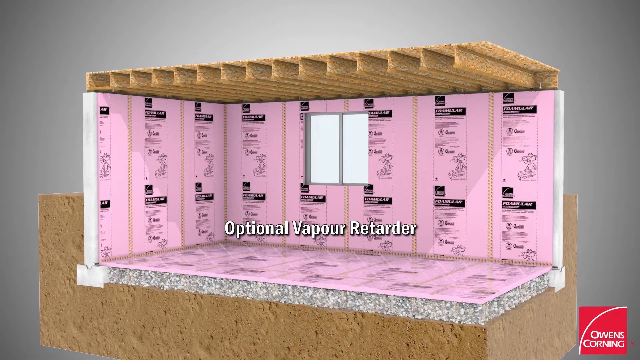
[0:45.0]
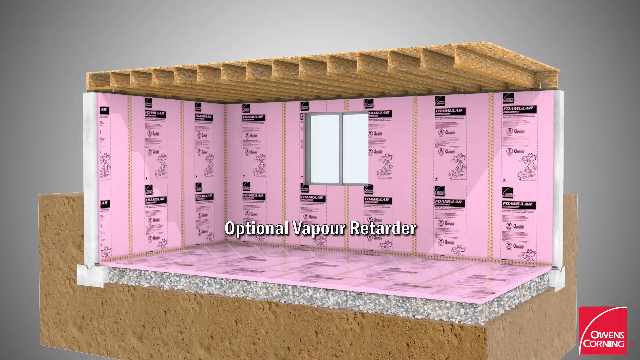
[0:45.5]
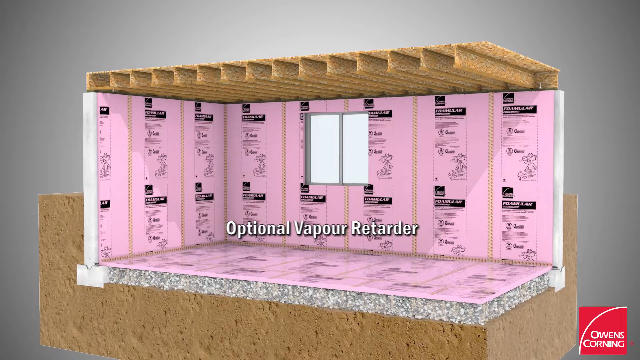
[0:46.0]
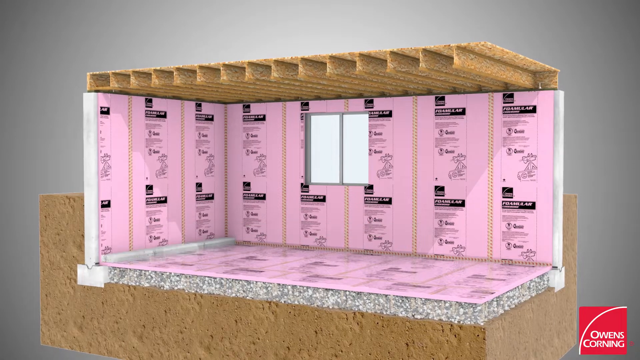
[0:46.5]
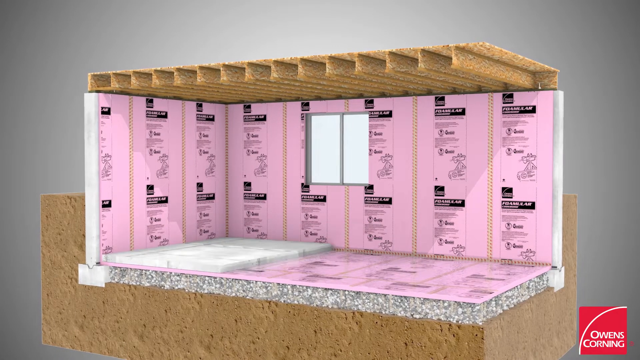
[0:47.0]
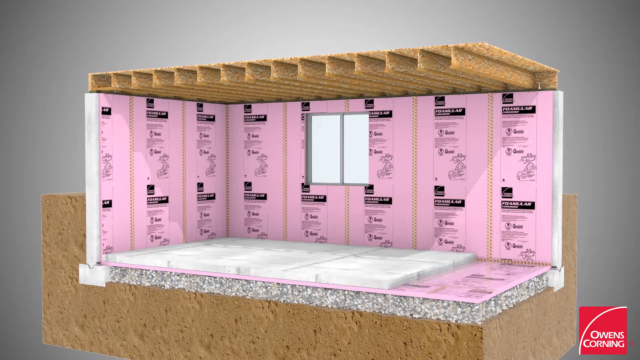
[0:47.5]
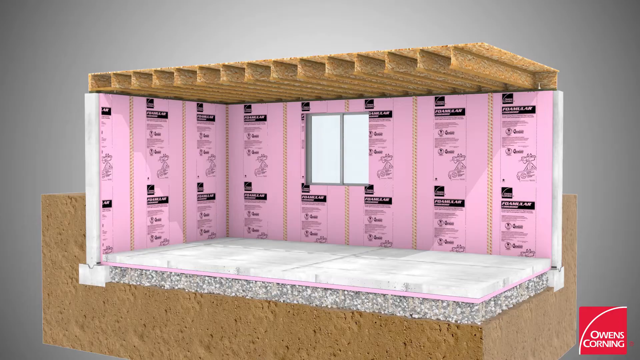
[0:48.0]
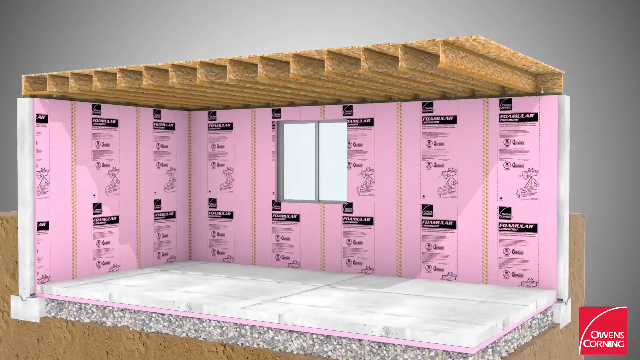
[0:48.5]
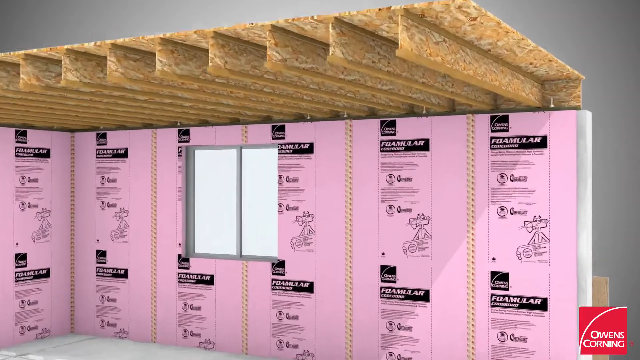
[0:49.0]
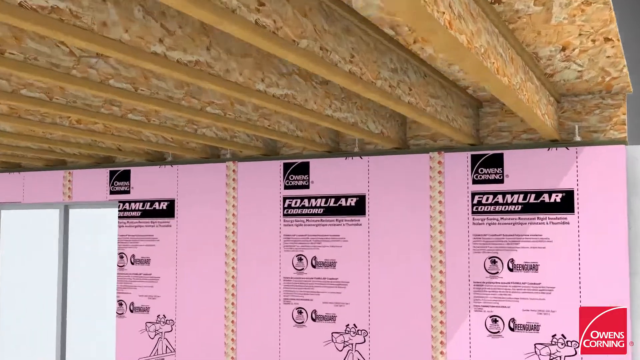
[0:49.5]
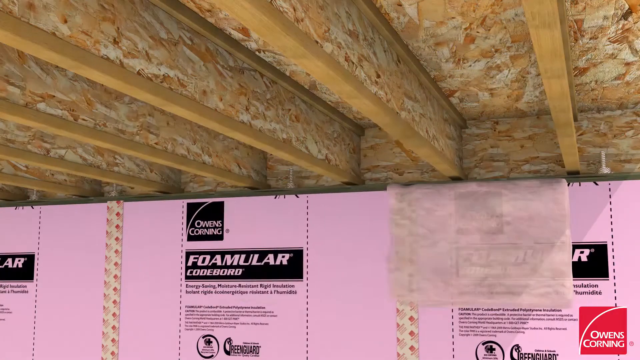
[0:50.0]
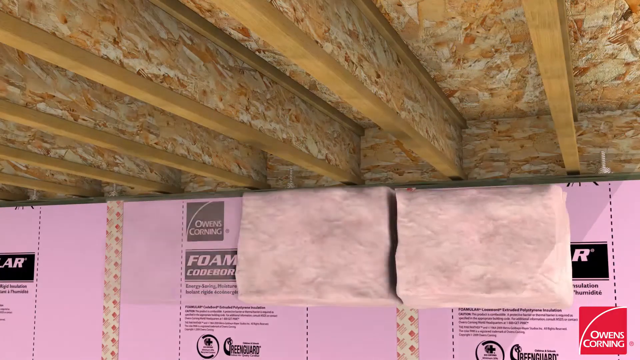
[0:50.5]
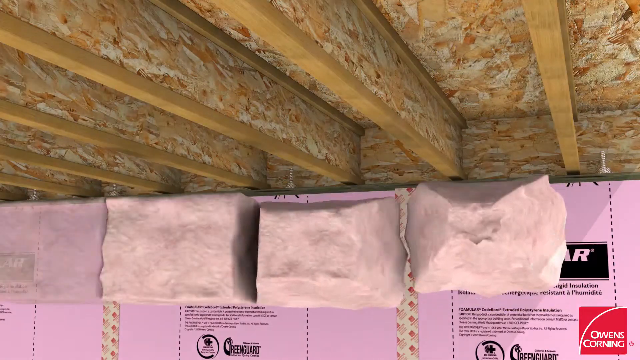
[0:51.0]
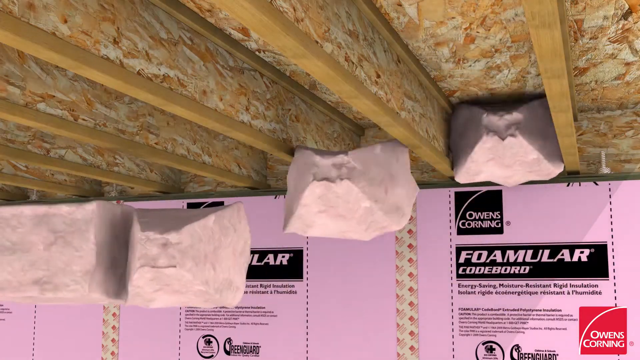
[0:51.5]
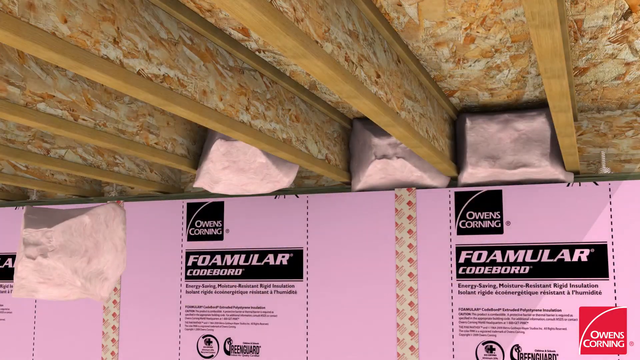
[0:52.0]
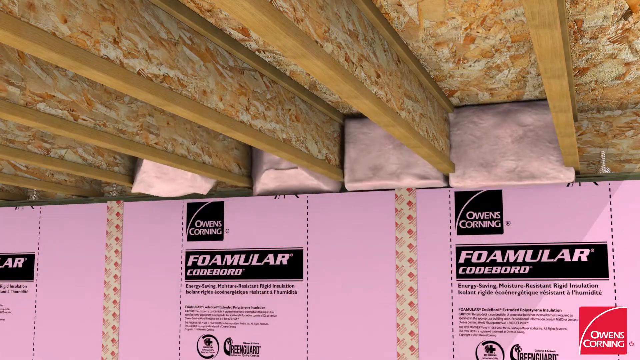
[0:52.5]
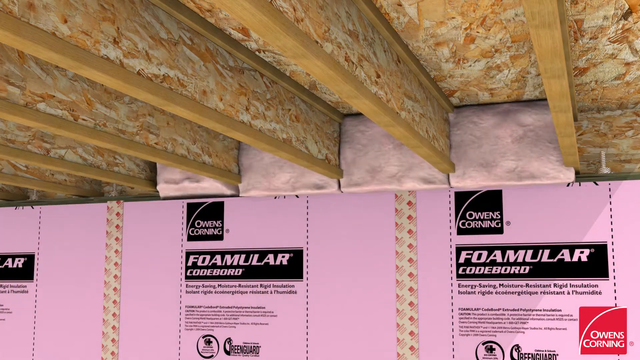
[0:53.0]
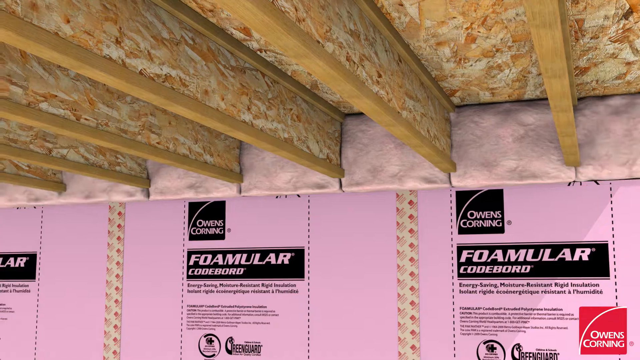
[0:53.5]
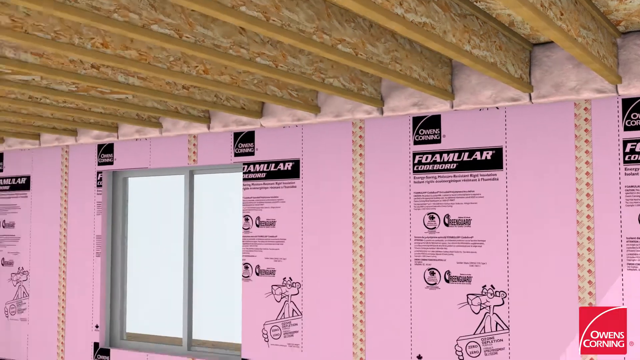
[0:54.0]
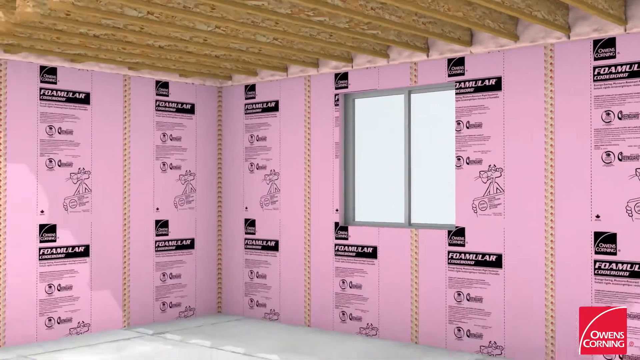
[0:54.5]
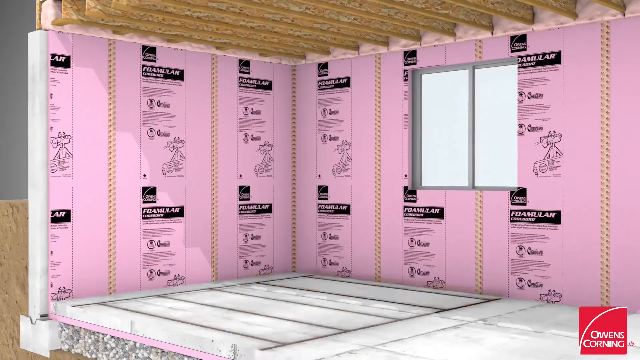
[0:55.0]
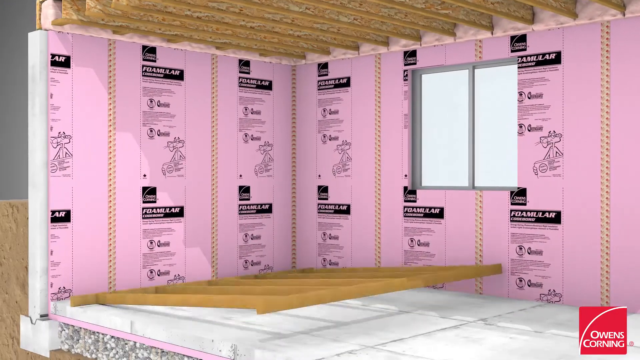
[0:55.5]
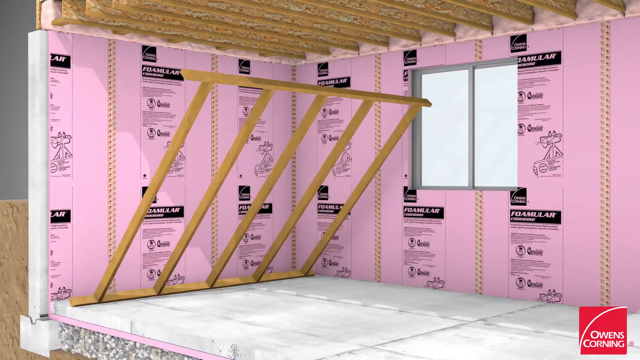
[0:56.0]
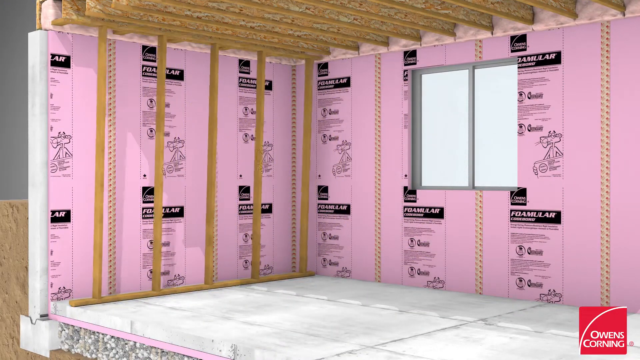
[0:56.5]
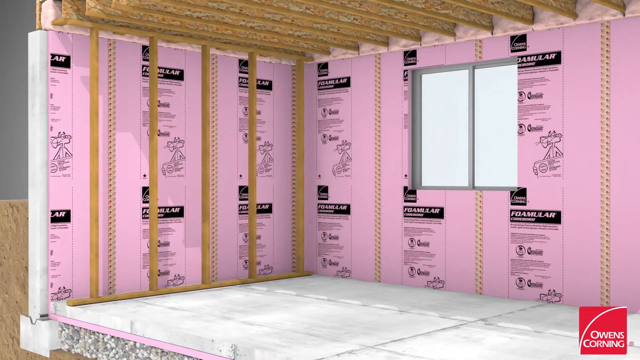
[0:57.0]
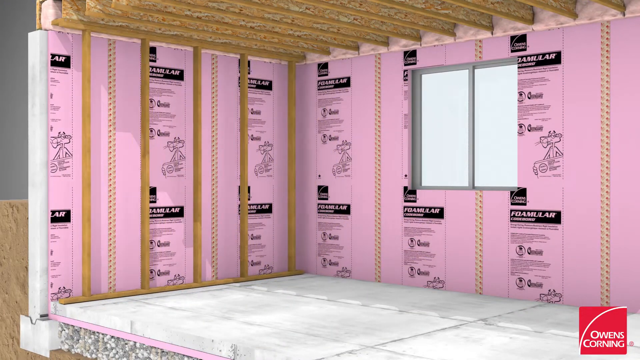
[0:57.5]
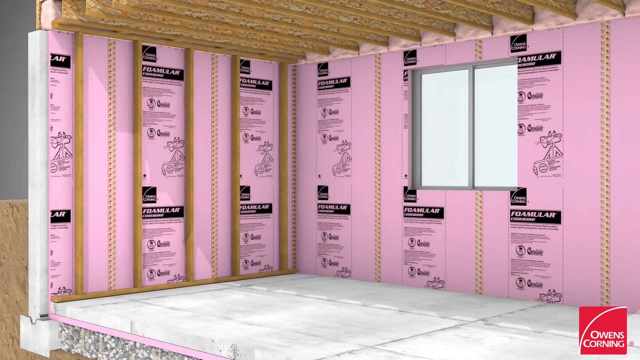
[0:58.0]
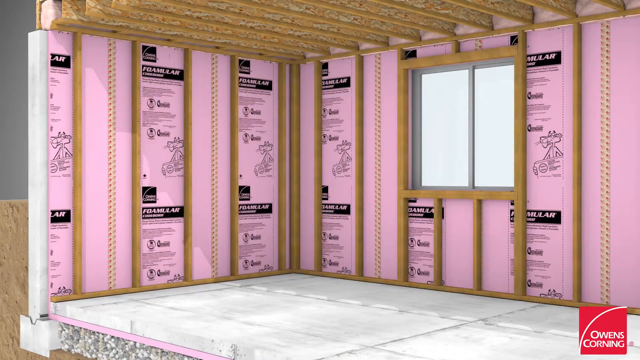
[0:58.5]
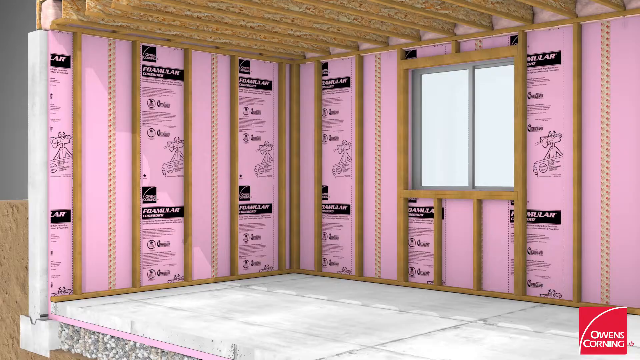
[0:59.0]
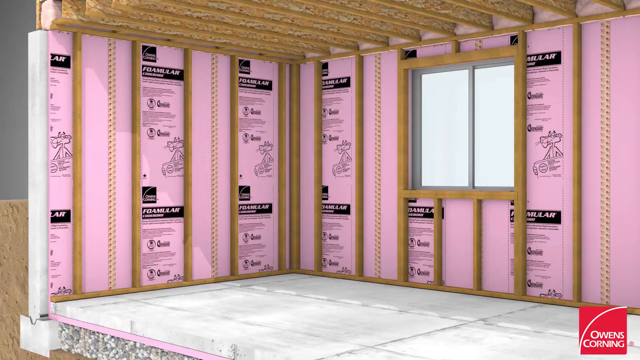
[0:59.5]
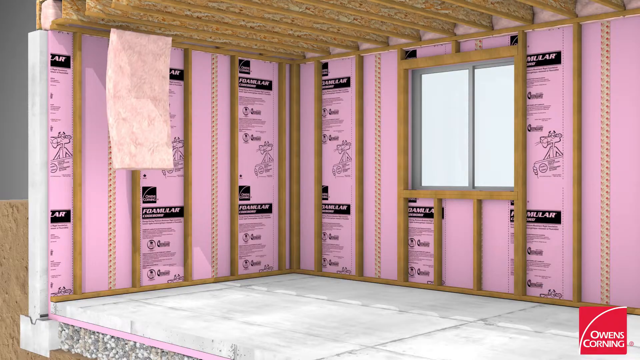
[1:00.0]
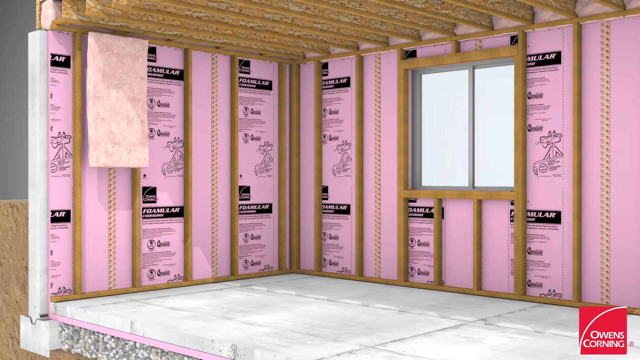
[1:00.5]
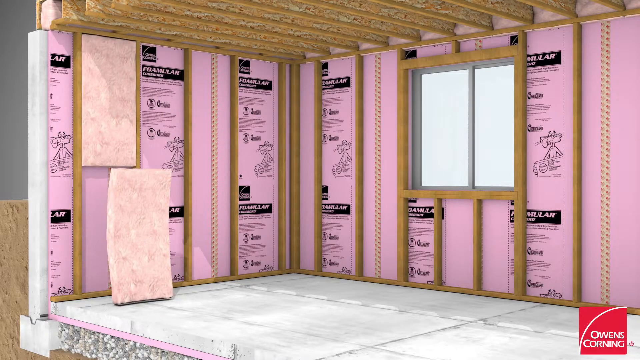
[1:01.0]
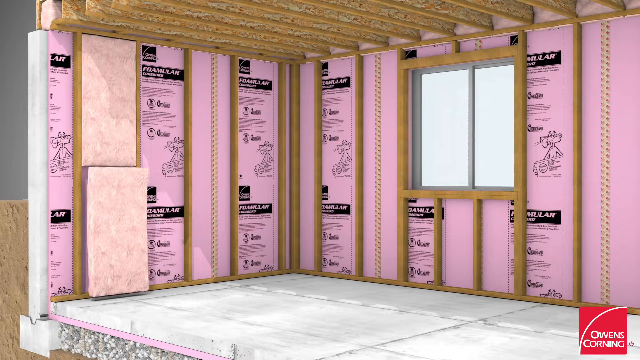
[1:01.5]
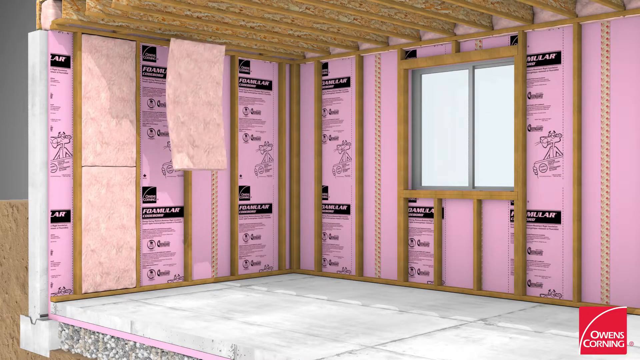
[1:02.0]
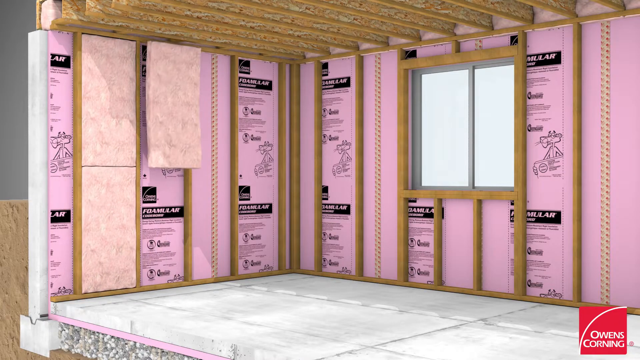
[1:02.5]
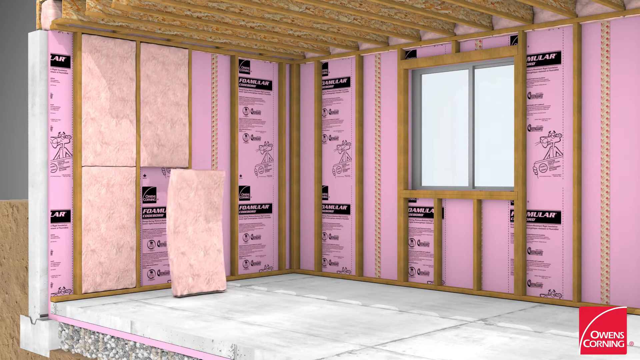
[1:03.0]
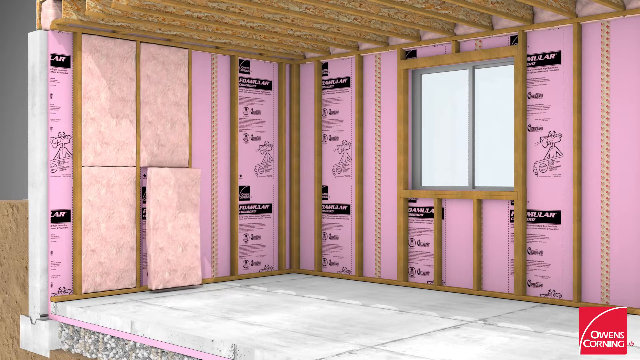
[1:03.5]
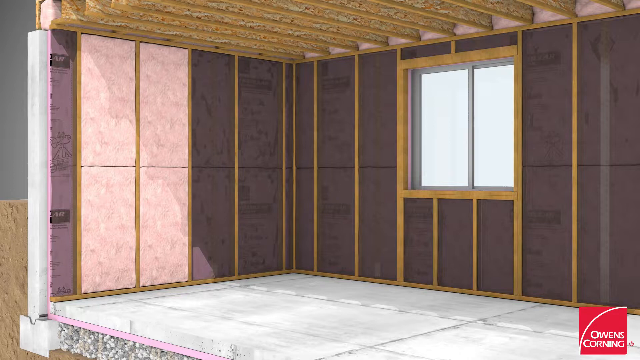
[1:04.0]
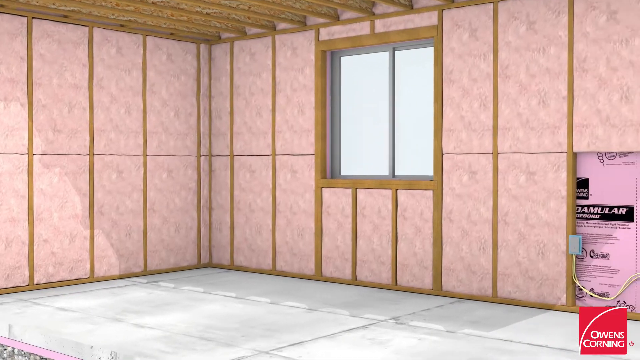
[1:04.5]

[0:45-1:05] A room is shown in 3D rendering with its framing visible. The framing is tan, and pink foam is placed in between the roof beams. The view flies in and out around the room as if there were a camera. Beams are put up against the wall, and there is a window. Insulation is laid between the wall beams and around the metal piping in the wall. Nail guns float in the air, sort of nailing a membrane over the insulation, and more nail guns attach the membrane to the ceiling framing; it is a moisture barrier of some sort. The room is finished with drywall, with a window visible. Text then reads "alternative mineral wool application," presenting an alternative product, maybe a more environmentally friendly one, and the view flies around the room through the same steps with this different type of product.